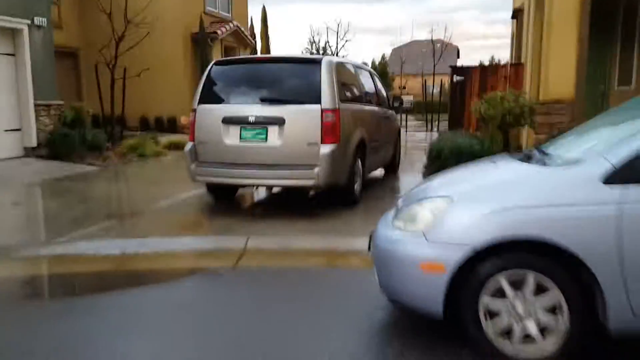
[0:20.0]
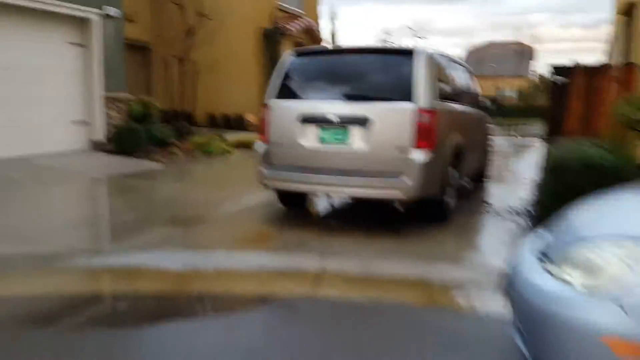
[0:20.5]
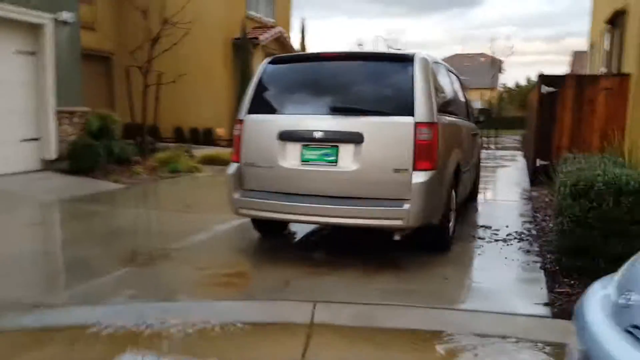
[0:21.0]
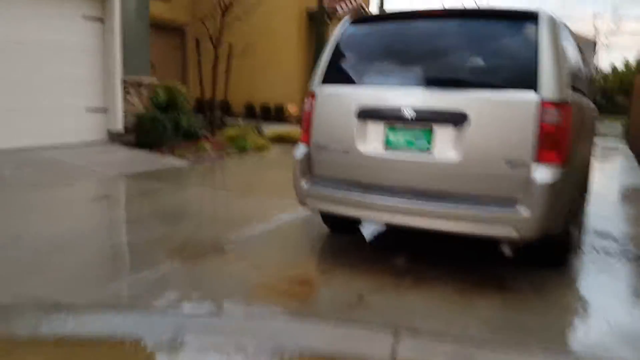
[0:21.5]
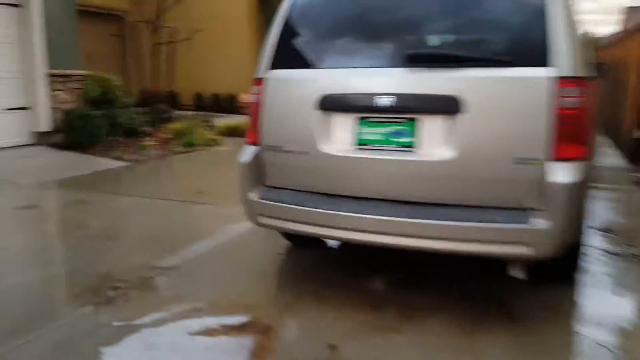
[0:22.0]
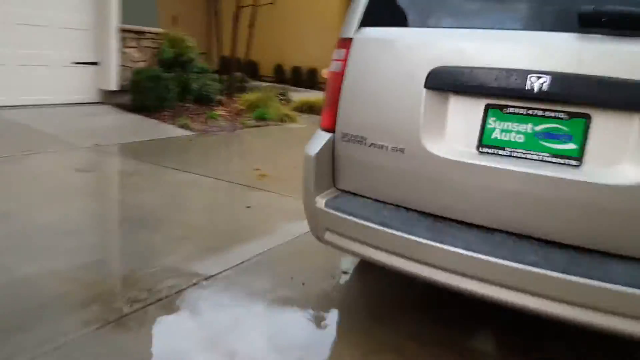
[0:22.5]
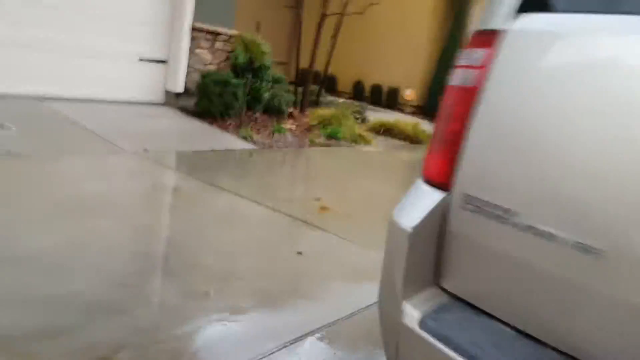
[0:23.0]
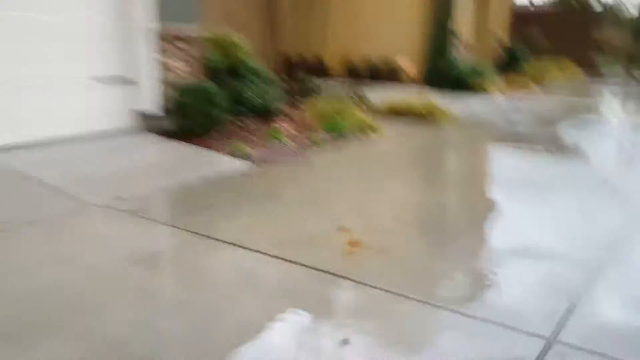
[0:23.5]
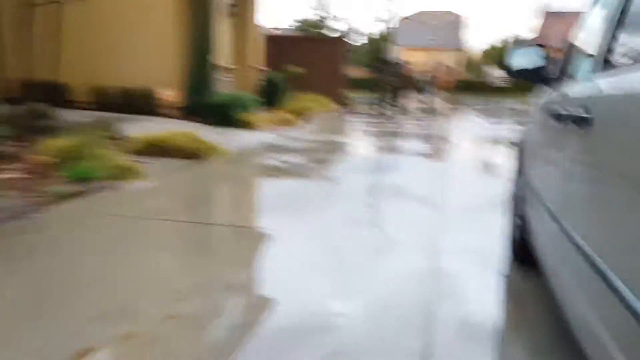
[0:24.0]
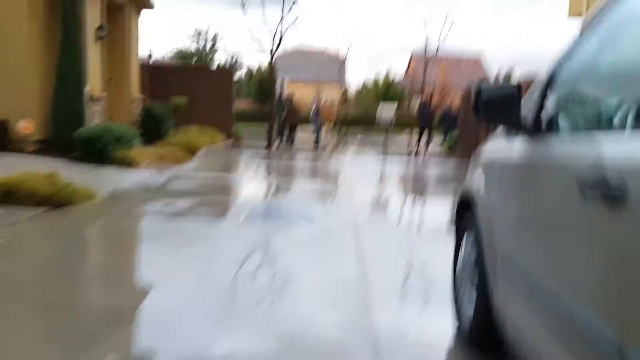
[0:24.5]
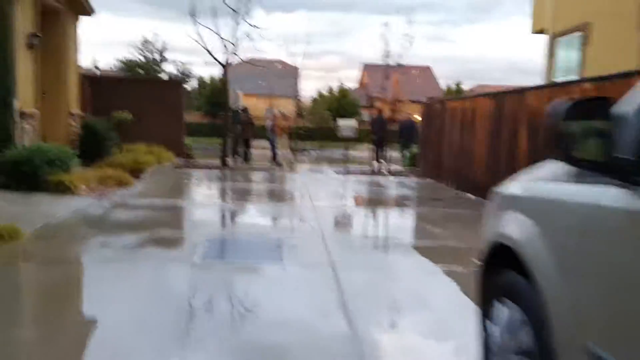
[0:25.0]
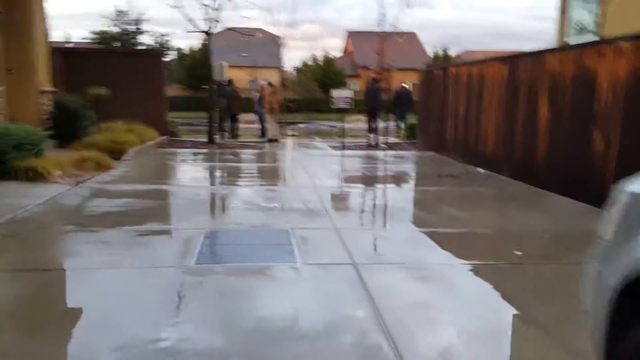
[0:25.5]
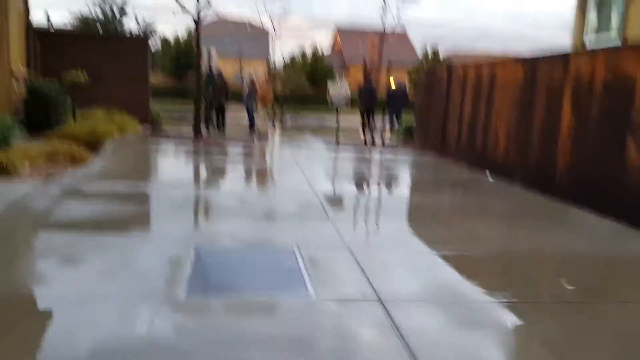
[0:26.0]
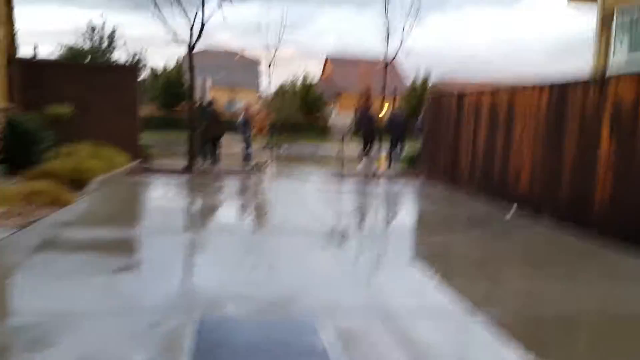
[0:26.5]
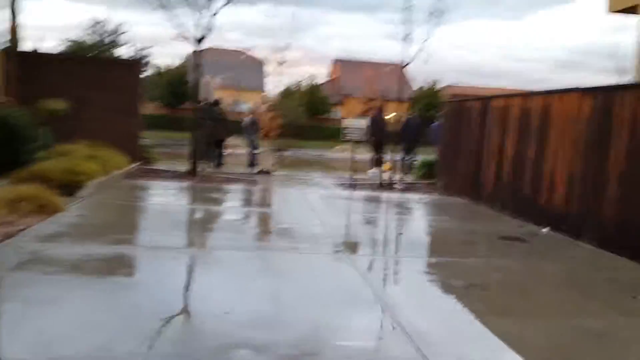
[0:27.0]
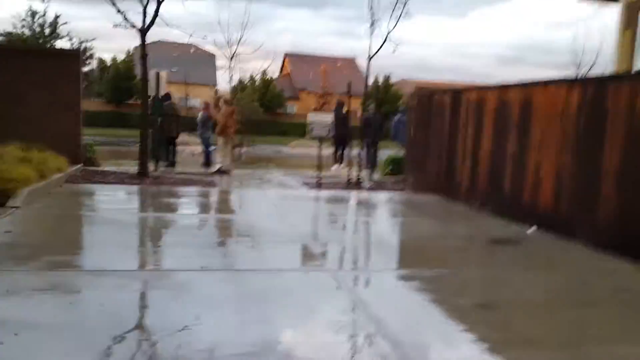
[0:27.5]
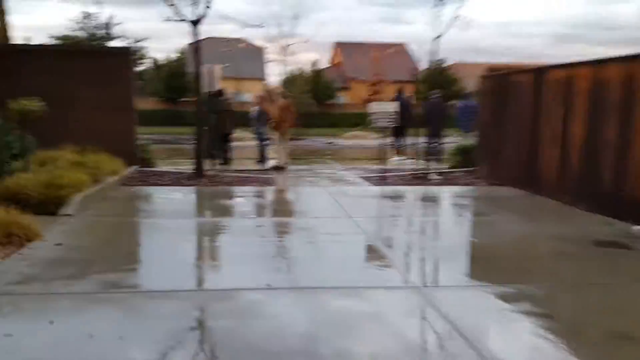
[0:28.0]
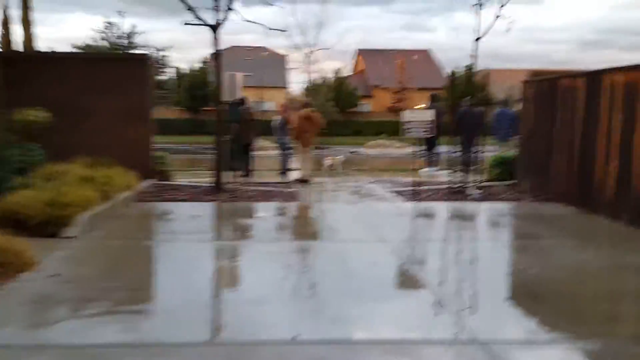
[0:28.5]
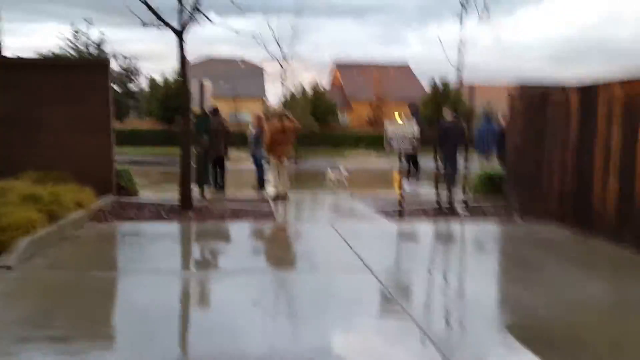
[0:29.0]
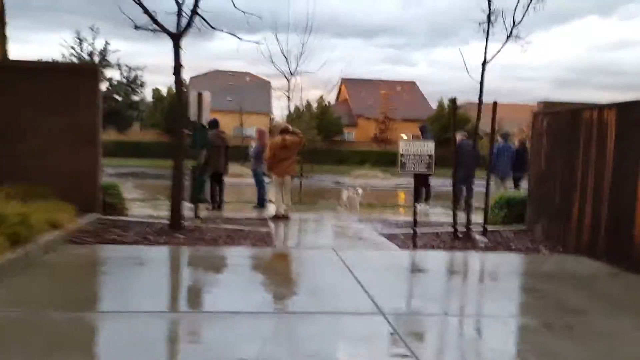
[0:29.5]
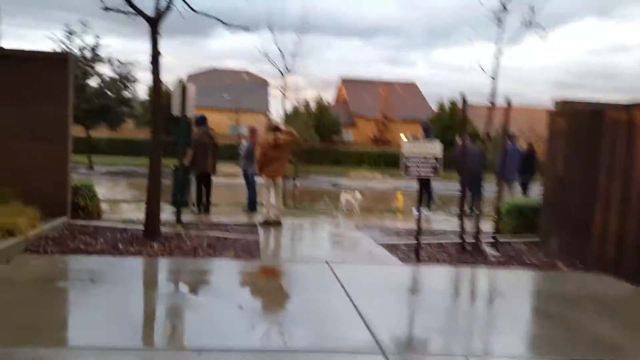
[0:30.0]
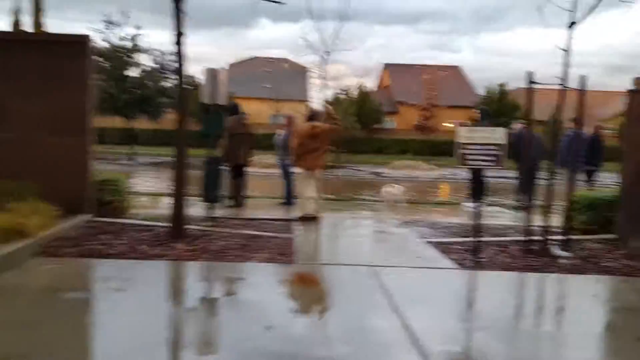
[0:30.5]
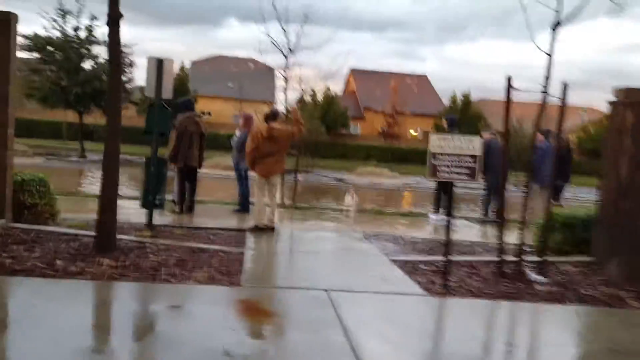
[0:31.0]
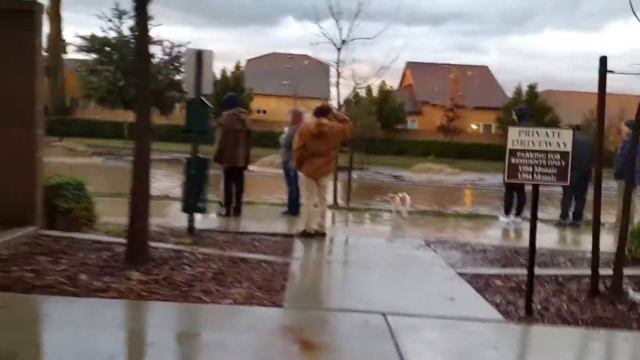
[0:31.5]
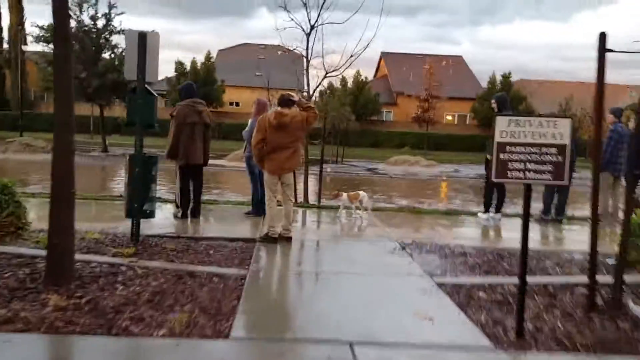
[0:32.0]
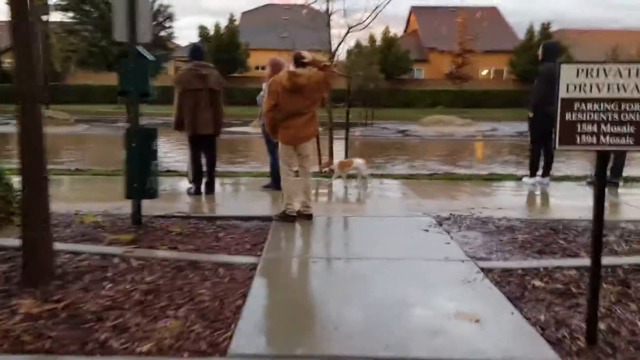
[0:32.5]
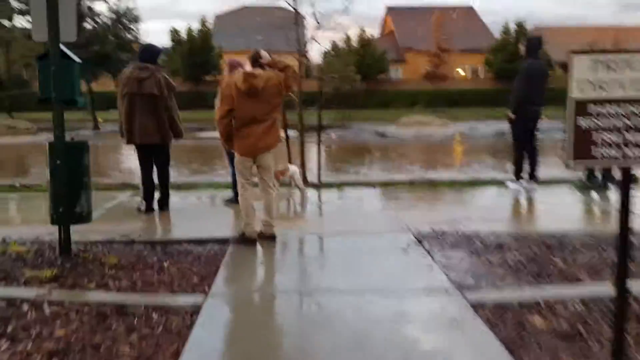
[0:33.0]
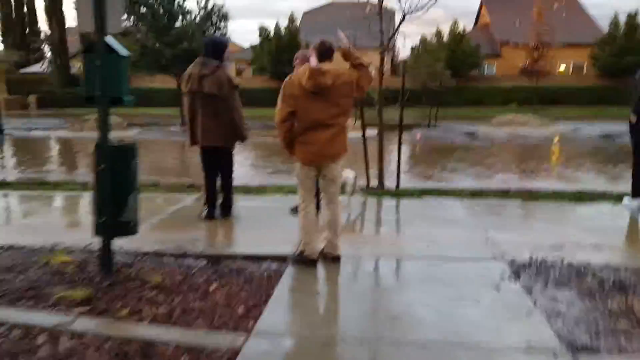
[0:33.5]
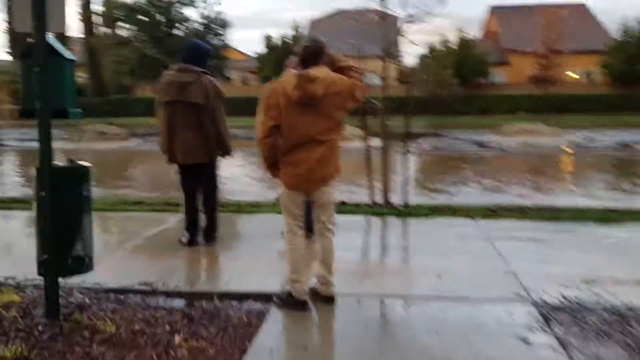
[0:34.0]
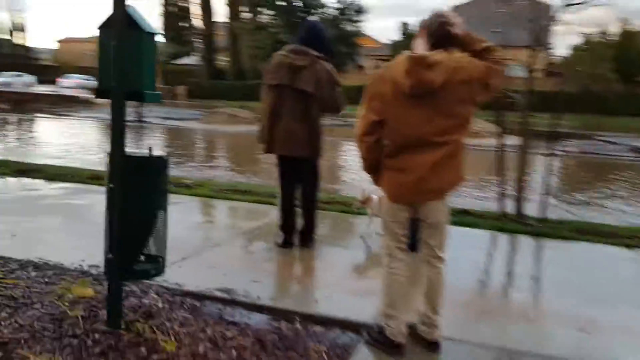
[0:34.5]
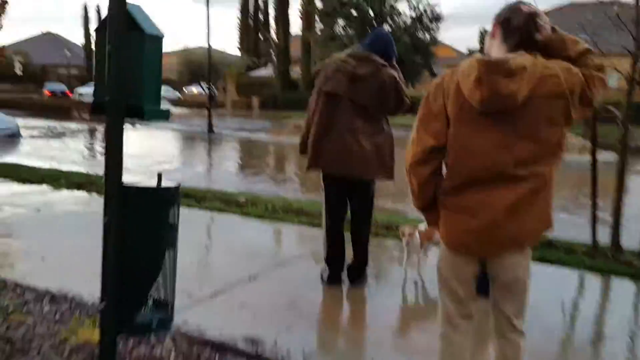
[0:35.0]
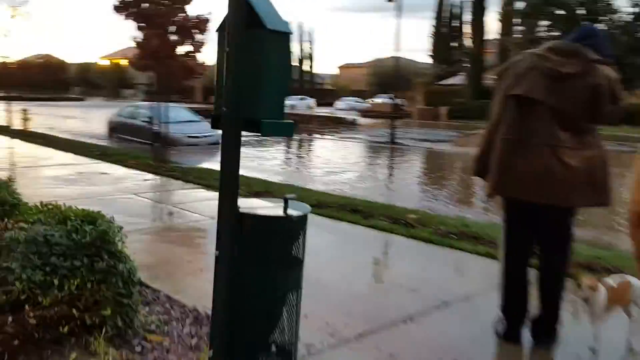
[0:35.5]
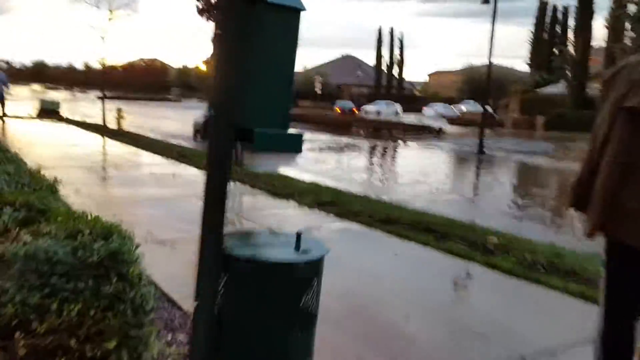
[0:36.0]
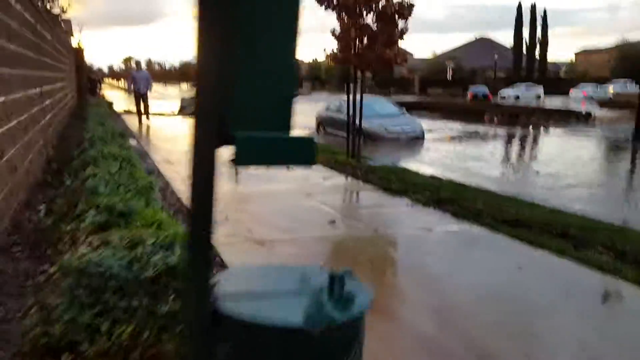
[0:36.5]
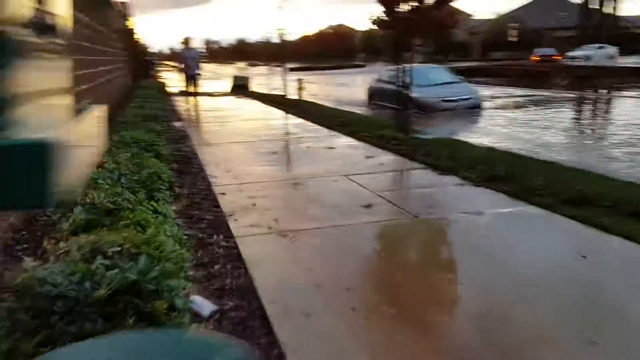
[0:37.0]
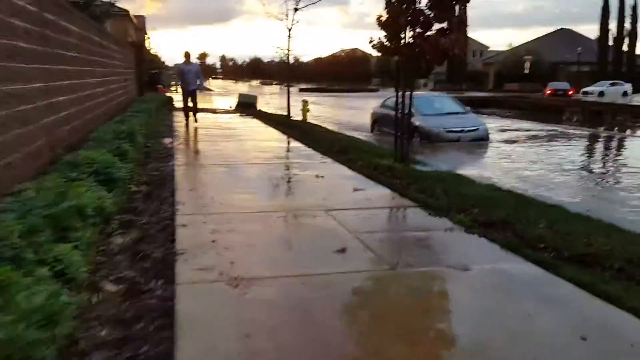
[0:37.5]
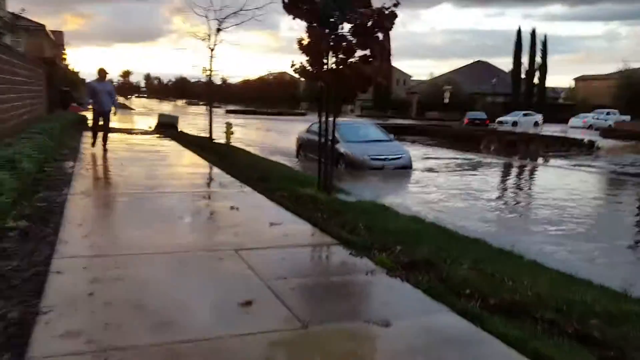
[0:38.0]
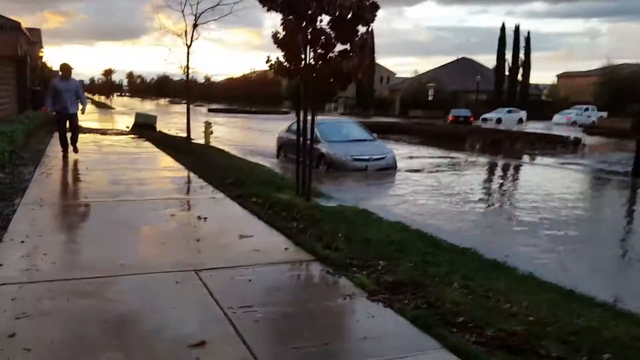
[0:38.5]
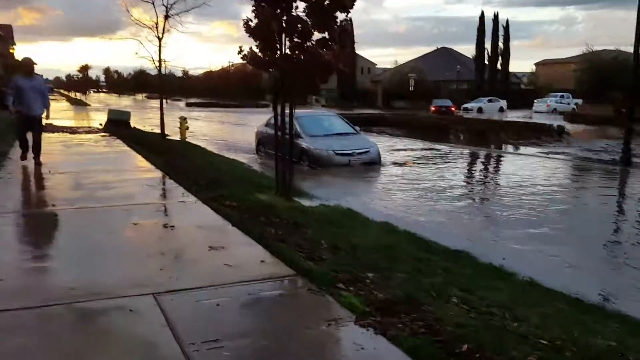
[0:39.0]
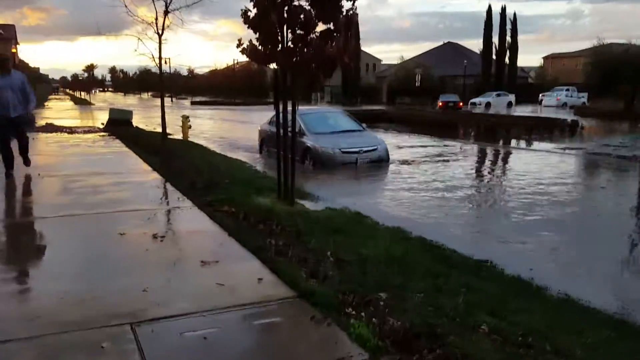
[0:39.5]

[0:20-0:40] The camera is held by someone walking, moving shakily as they head toward an SUV parked on a driveway. They walk right past the SUV; the streets are wet, probably from heavy rain, and the person keeps walking. A sign reads "private driveway, parking for residents," with a house address at the bottom. Continuing on, he reaches a driveway where five people are standing as if waiting for something; one of them has a dog. He turns left and keeps walking, and the streets are flooded. A grey car in the middle of the street has almost its entire wheels covered in water.